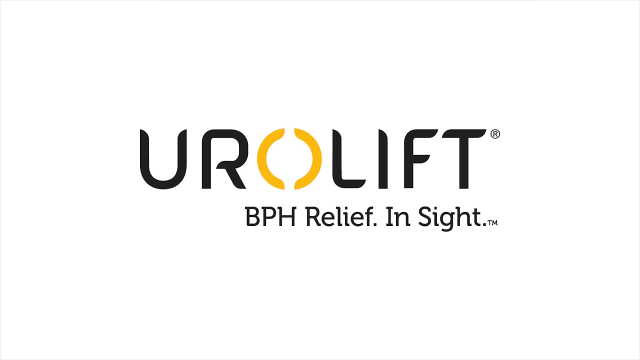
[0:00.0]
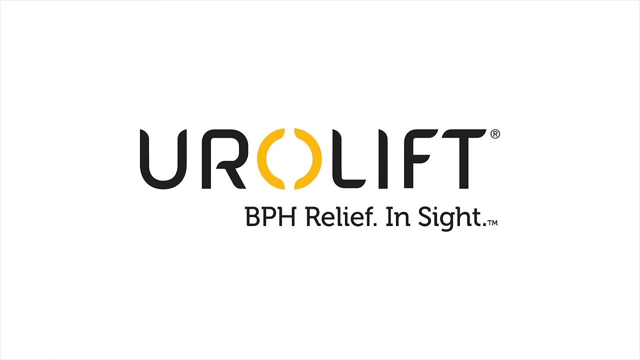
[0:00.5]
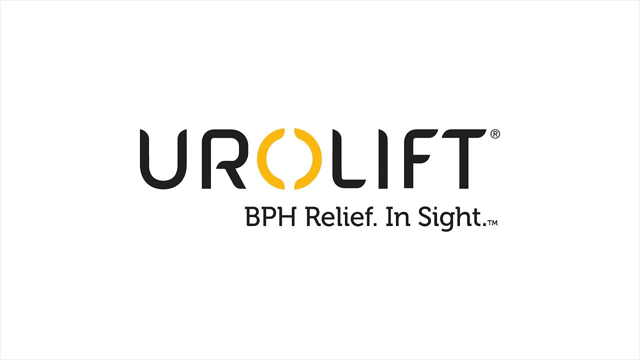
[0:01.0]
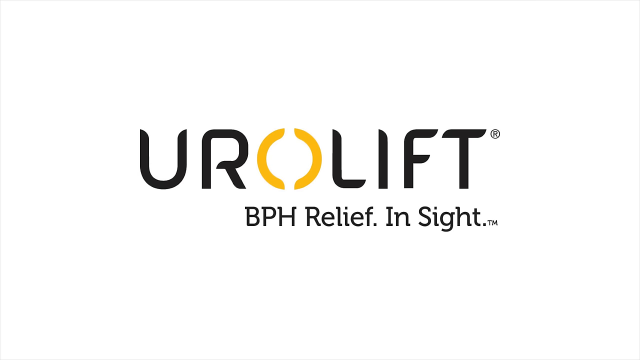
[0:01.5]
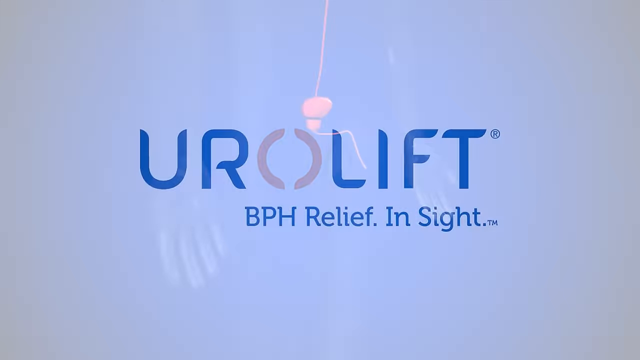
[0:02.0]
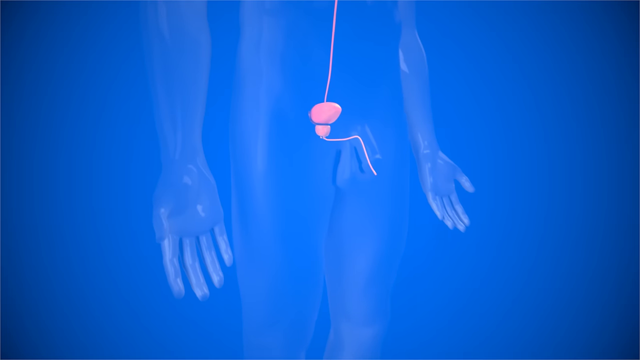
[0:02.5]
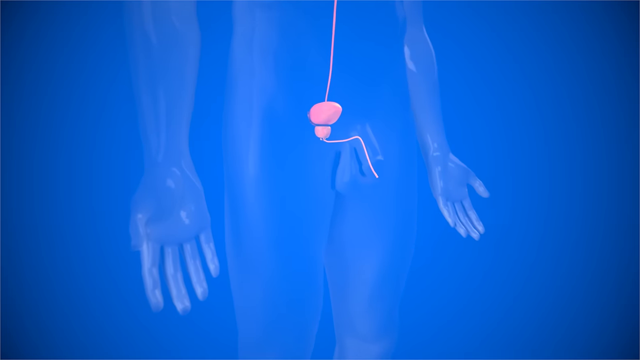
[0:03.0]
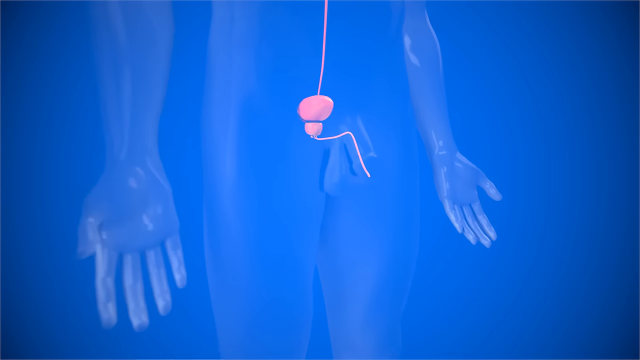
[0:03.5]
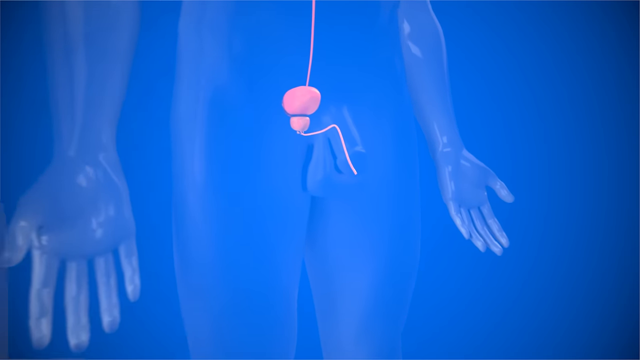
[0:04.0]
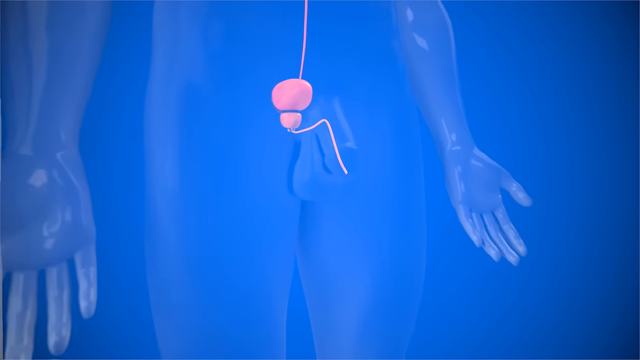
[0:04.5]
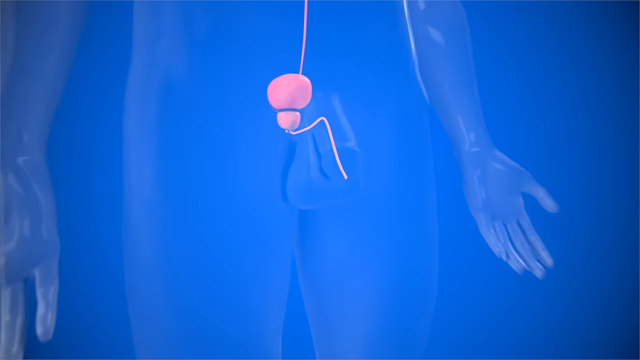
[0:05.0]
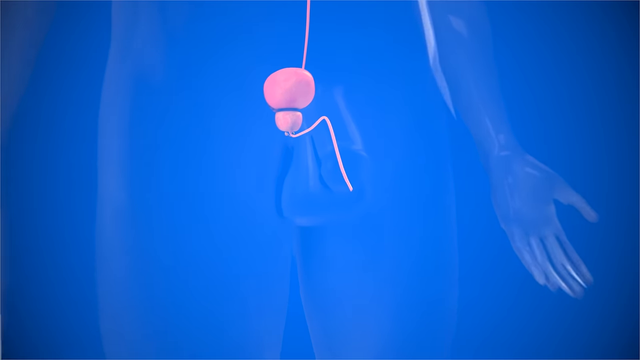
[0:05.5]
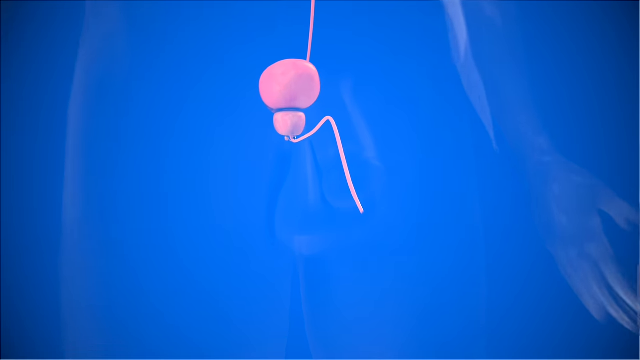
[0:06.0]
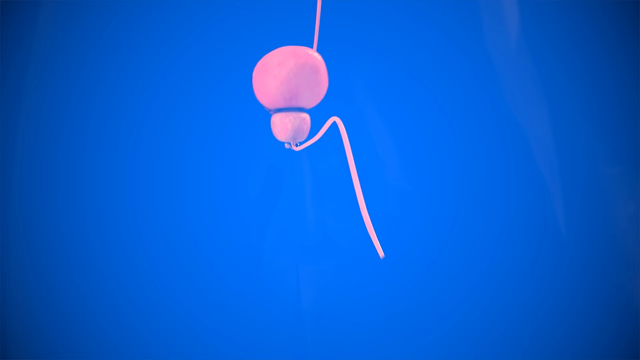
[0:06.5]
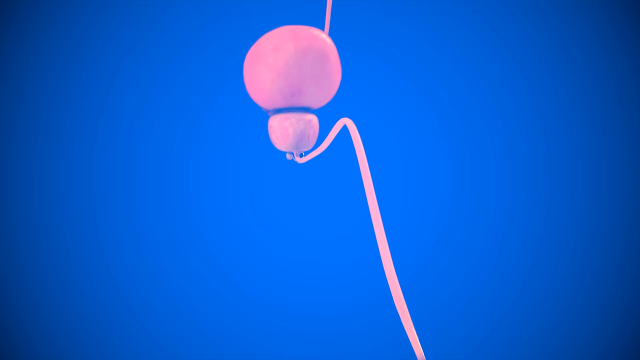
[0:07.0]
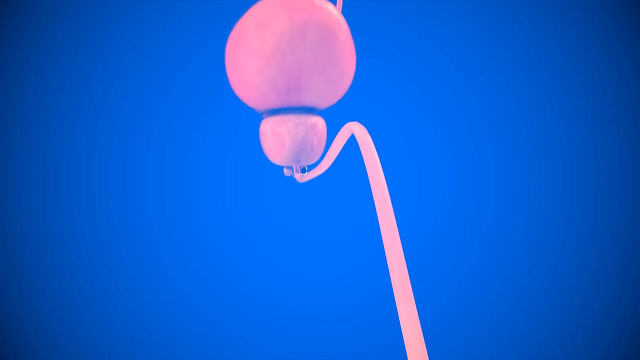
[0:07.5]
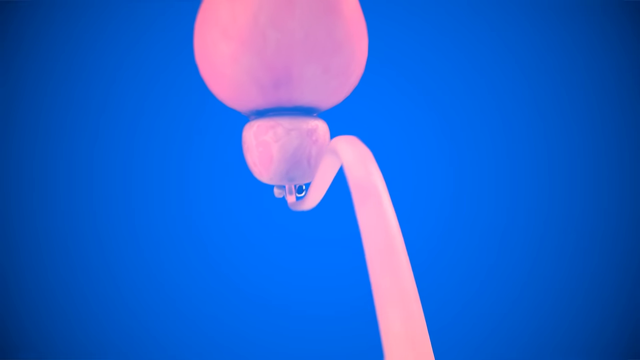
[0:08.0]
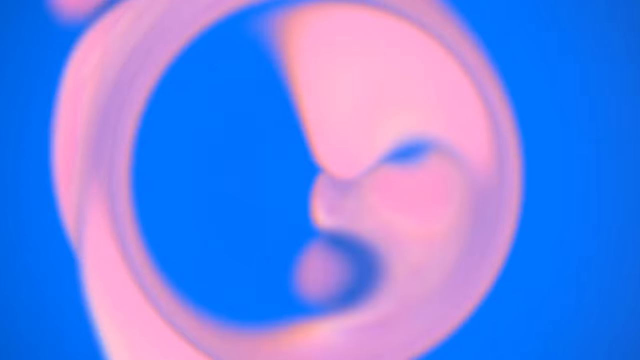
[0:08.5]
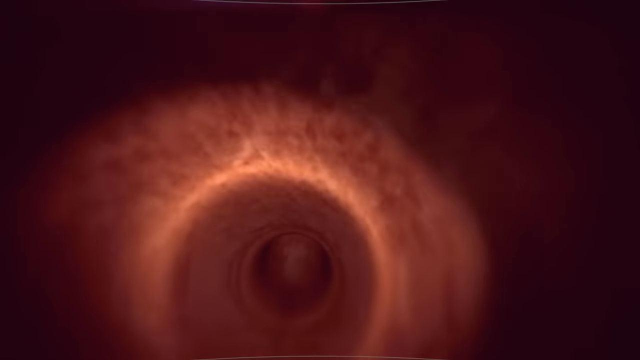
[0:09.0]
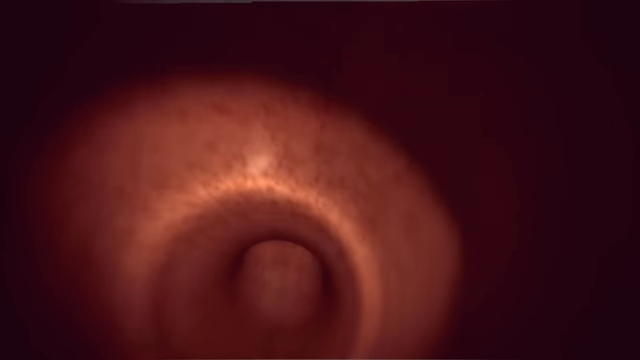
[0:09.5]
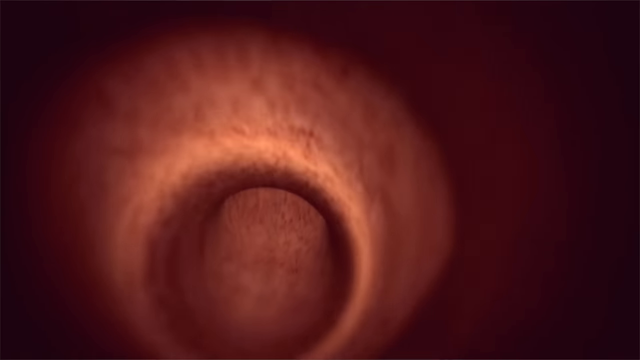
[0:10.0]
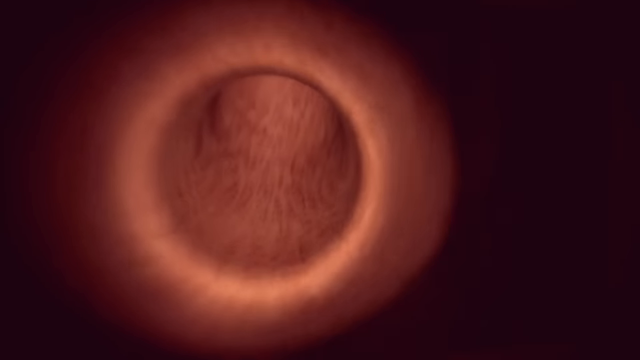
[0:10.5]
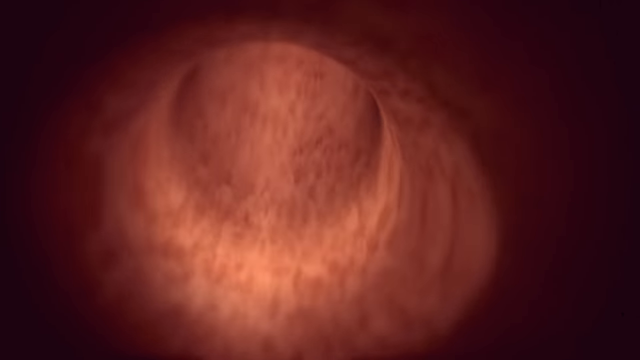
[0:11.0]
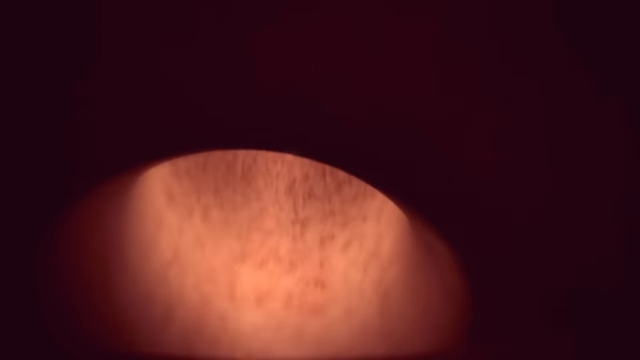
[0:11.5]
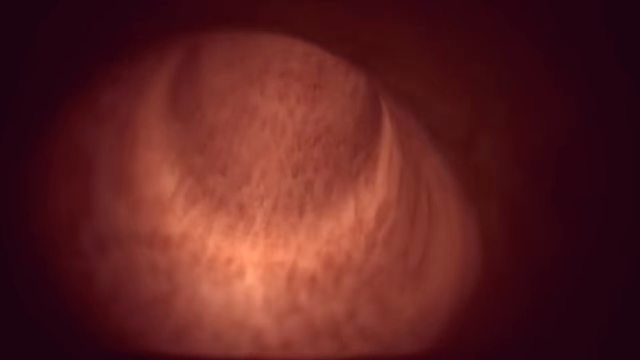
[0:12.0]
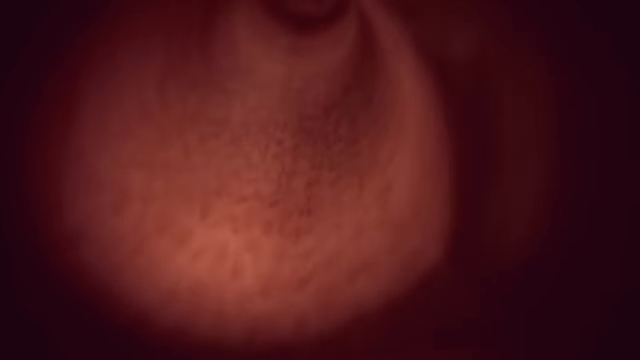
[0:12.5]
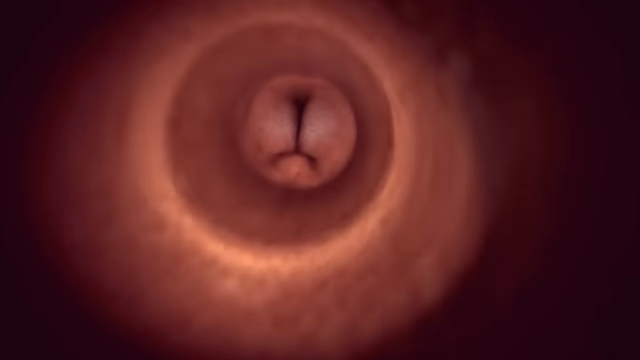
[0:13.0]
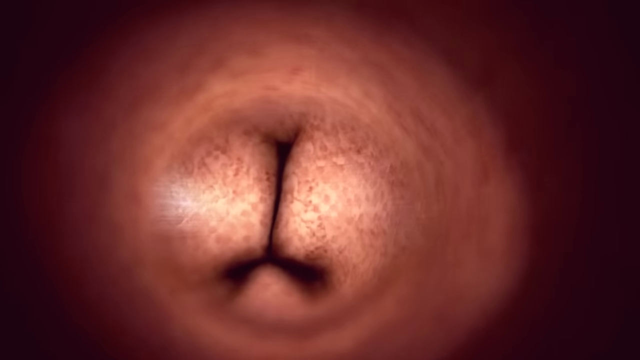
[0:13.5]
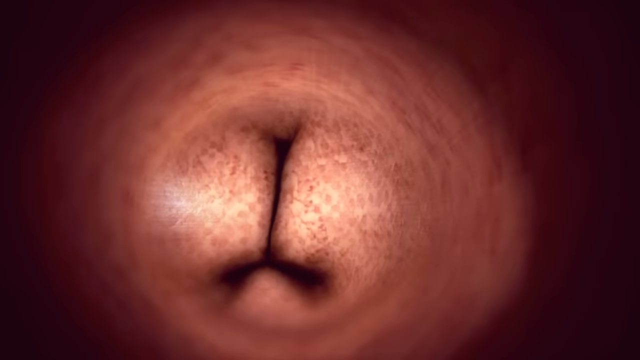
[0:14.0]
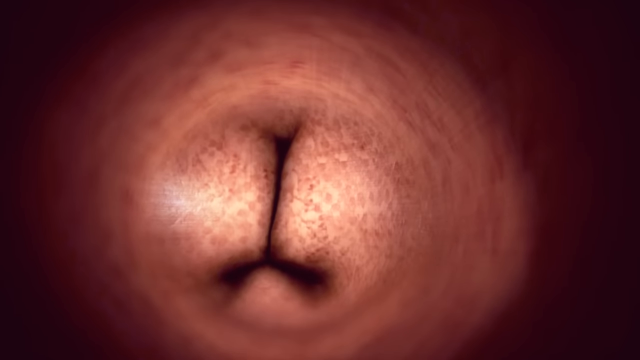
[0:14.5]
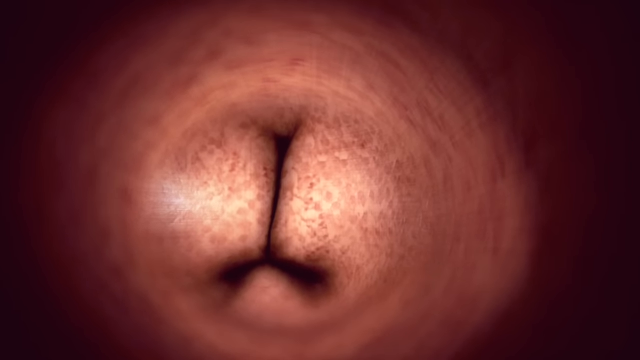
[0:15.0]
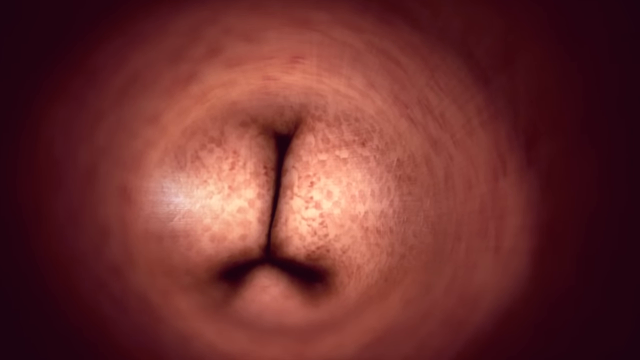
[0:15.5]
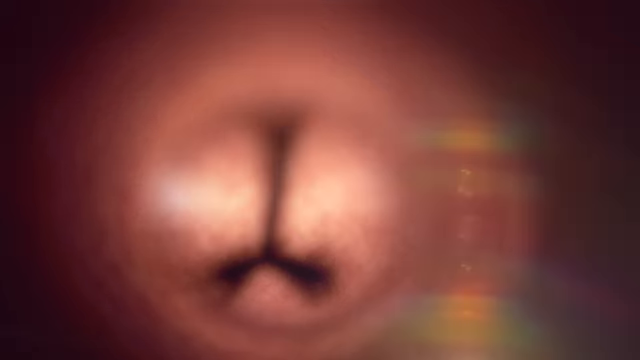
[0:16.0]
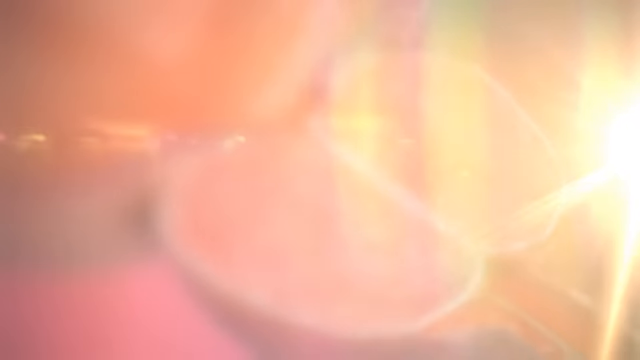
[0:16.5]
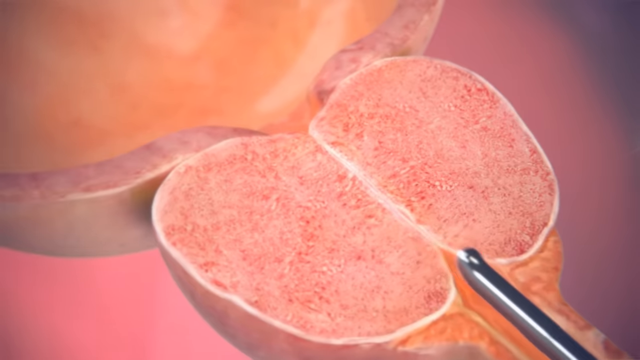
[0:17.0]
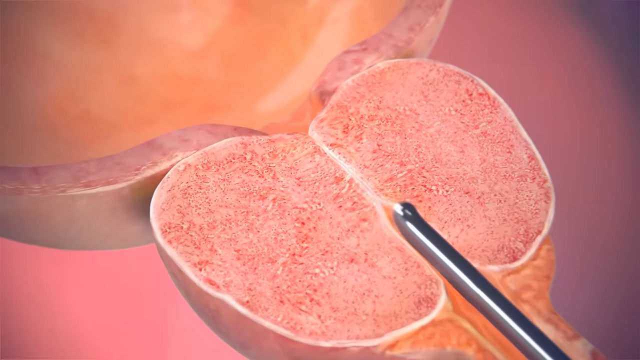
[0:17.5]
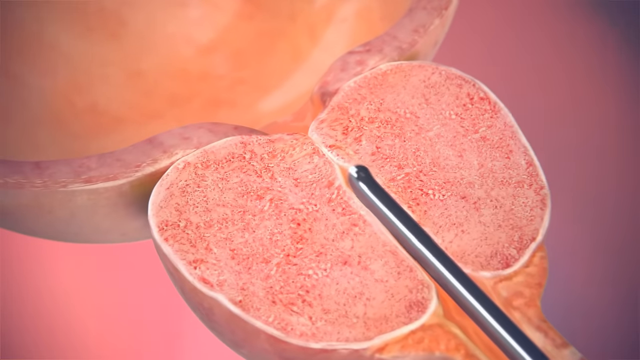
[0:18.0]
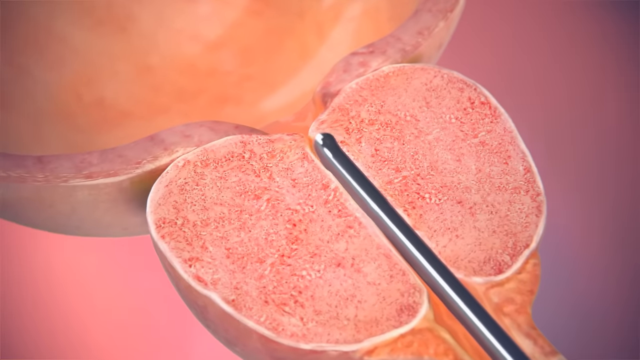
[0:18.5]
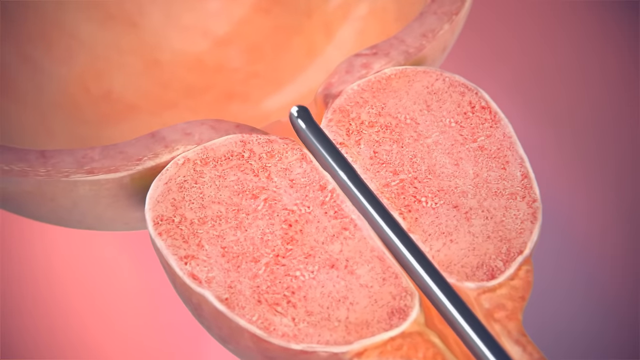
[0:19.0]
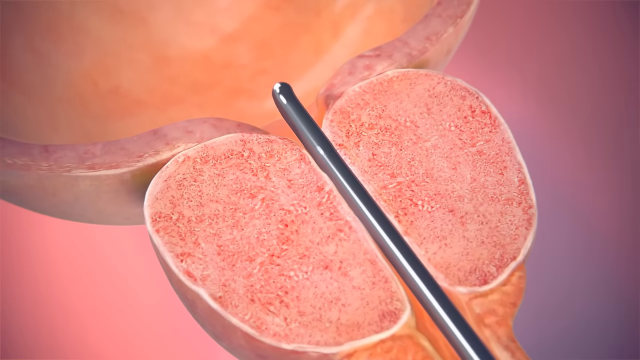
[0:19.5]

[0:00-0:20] The video opens with the words "Urolift BPH relief insight" written in black text on a pale off-white background, with the letter "O" in yellow. Next comes an animated illustration of a human body that looks opaque: a male form viewed from the waist down to the knees. A pink illustration that looks like the bladder and urethra passes through the male organ. The camera zooms in on the pink illustration of the bladder, and what looks like a journey inside the urethra tube begins, traveling through the whole of the tube in shades of brown. The journey continues down to the opening between the urethra and the bladder, which looks swollen and narrow. The travel pauses there, focusing on the swollen, narrow-looking opening. Next, an illustration shows what looks like a sliced-open swollen prostate and bladder, cut laterally to reveal the inside of the swollen prostate between the bladder and the urethra. A metal medical object that looks like a slim rod is pushed through the narrow opening.